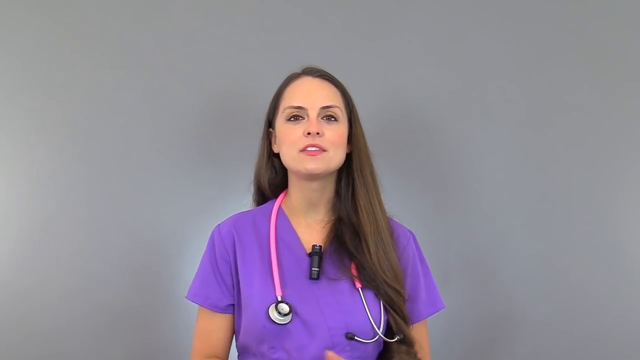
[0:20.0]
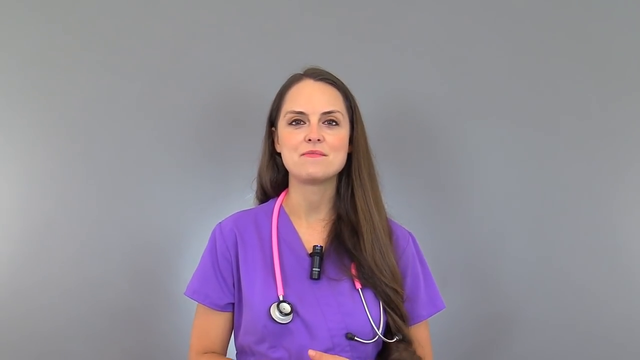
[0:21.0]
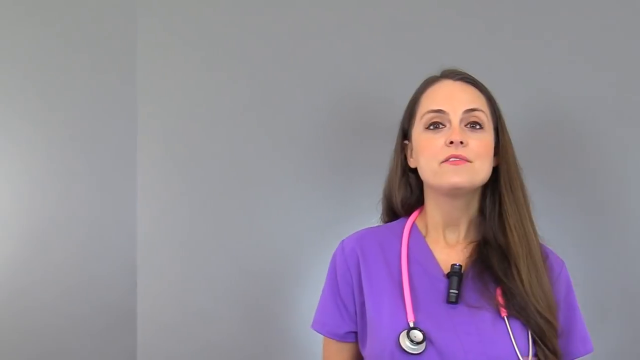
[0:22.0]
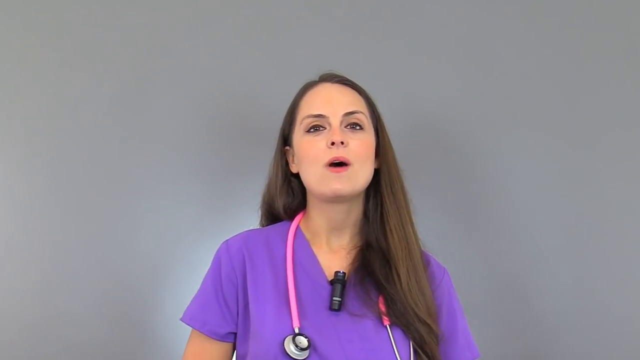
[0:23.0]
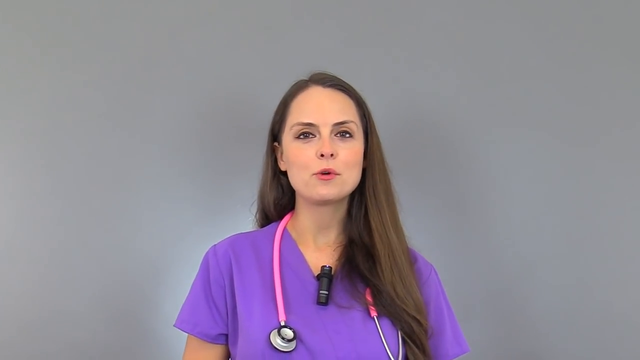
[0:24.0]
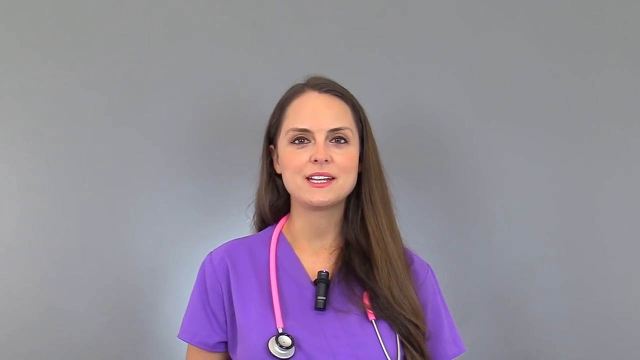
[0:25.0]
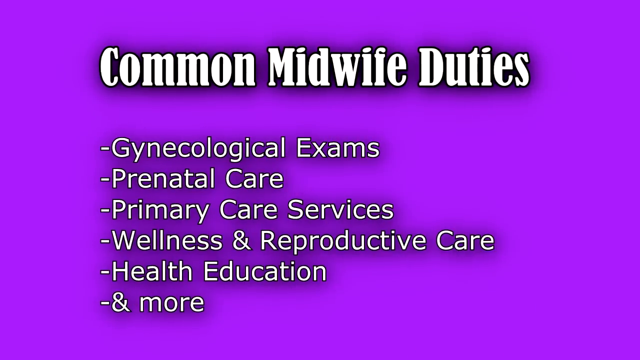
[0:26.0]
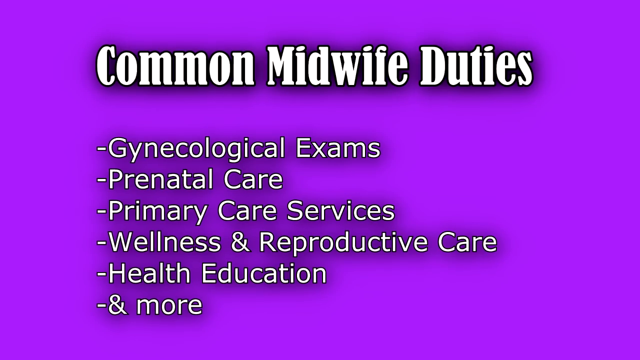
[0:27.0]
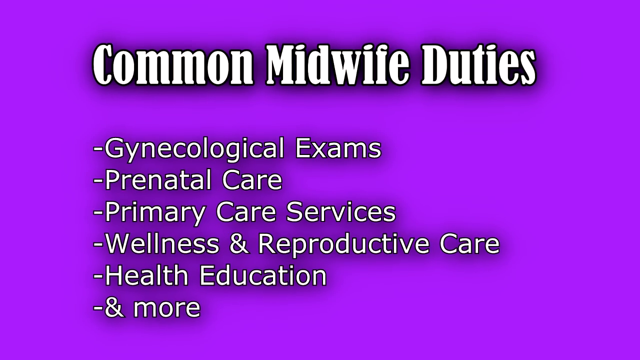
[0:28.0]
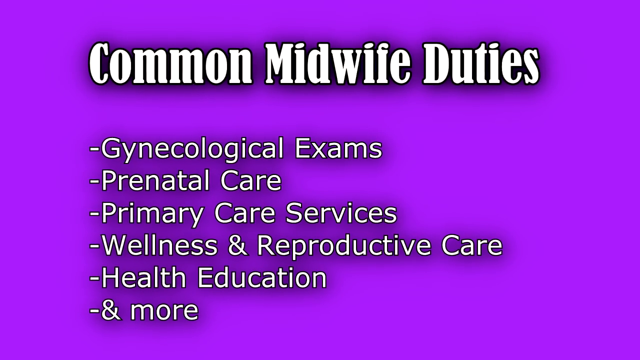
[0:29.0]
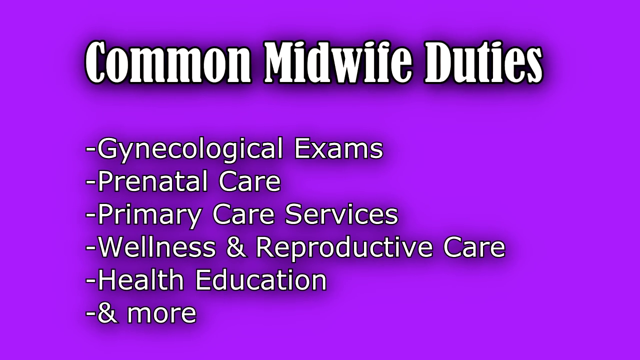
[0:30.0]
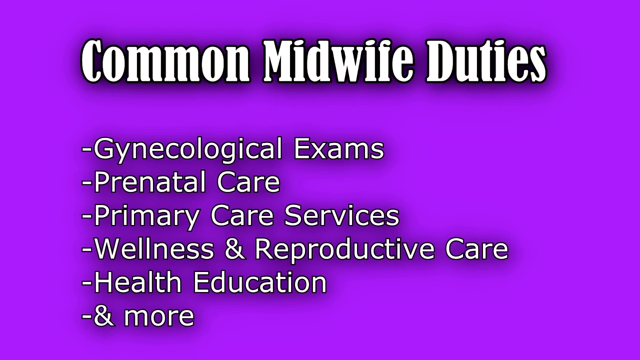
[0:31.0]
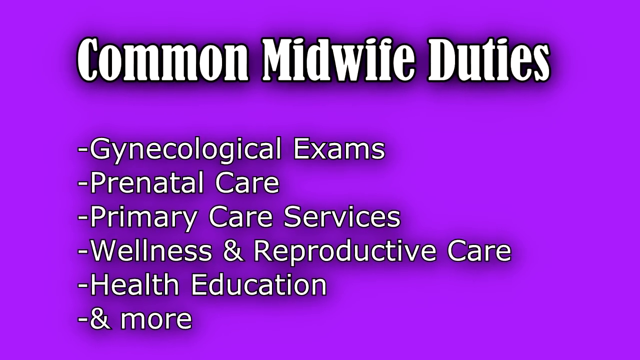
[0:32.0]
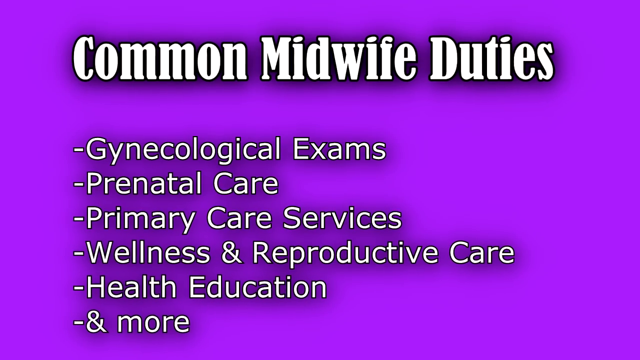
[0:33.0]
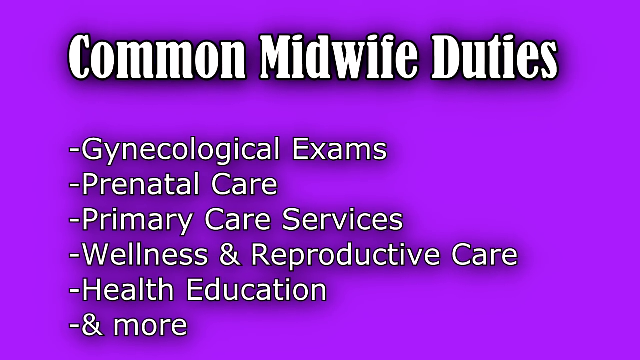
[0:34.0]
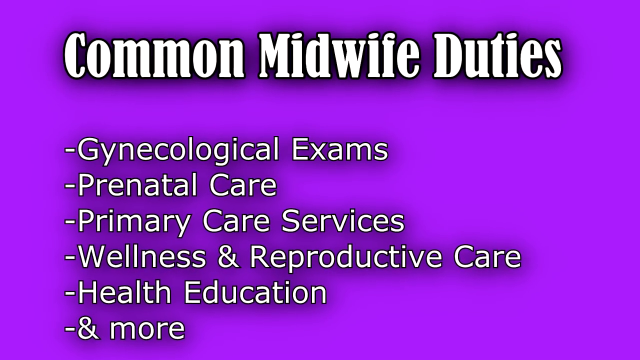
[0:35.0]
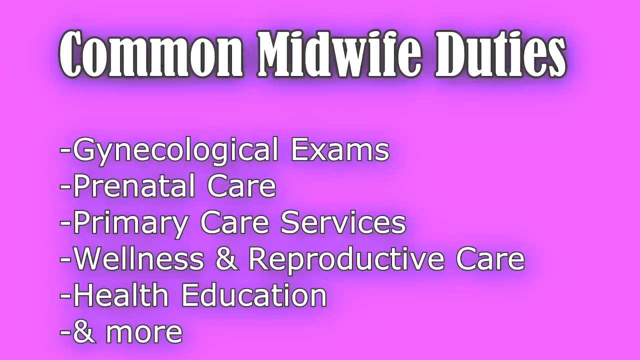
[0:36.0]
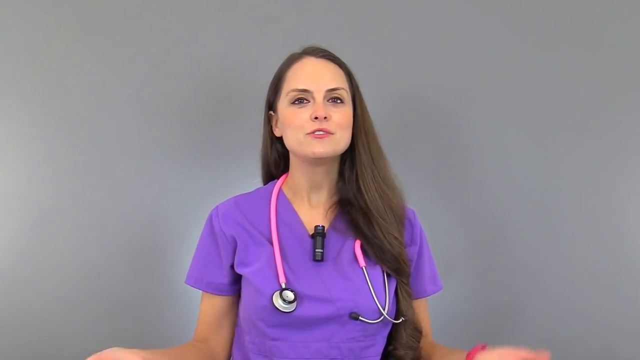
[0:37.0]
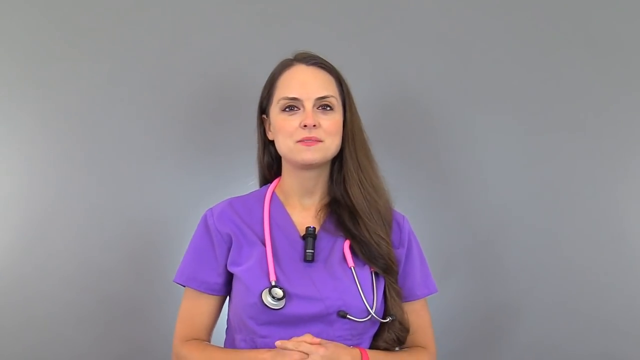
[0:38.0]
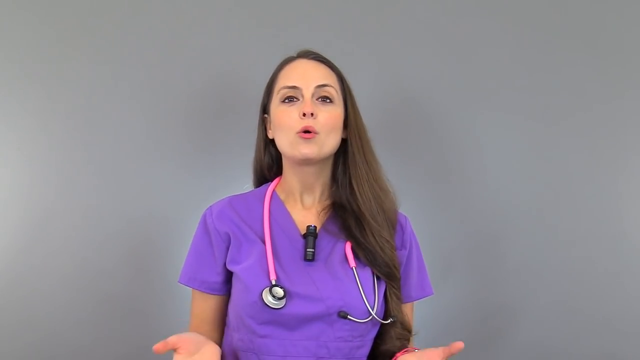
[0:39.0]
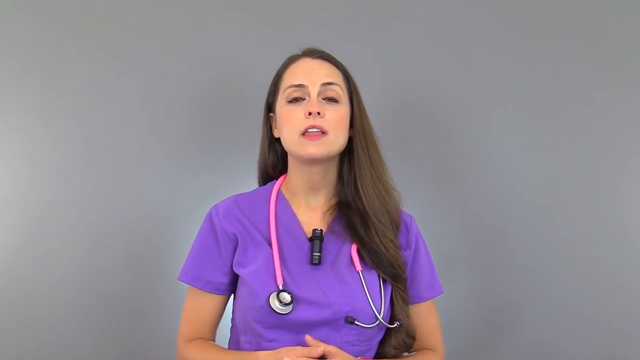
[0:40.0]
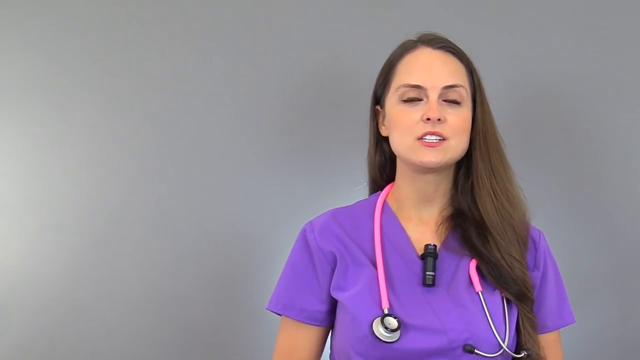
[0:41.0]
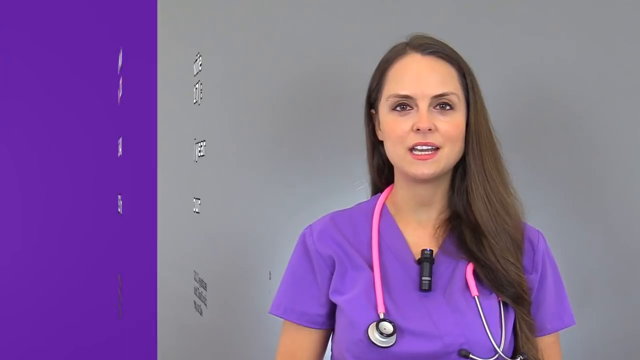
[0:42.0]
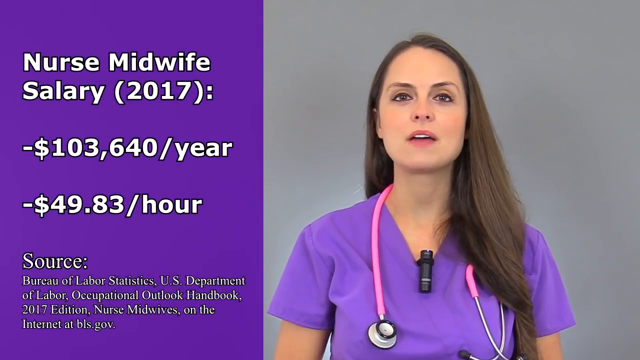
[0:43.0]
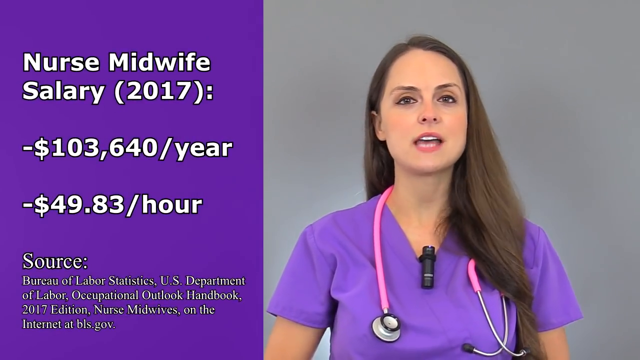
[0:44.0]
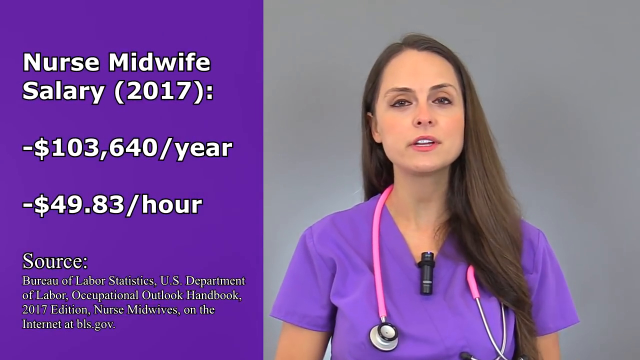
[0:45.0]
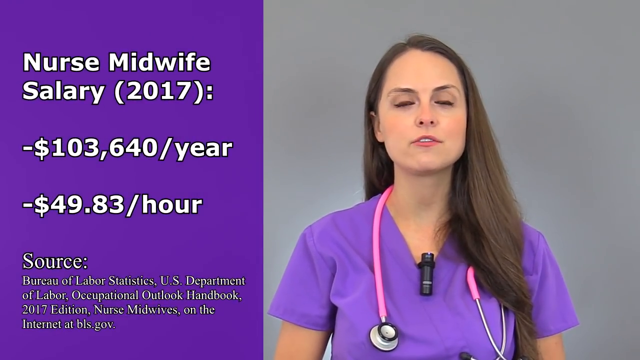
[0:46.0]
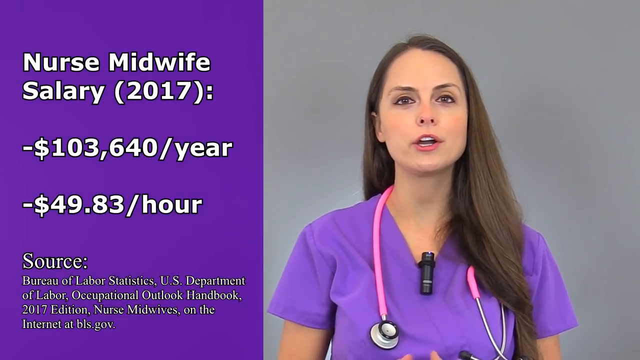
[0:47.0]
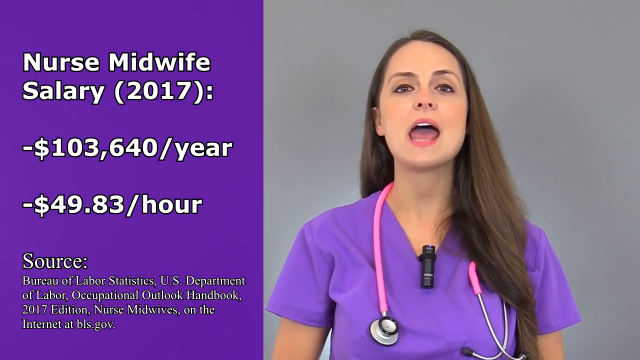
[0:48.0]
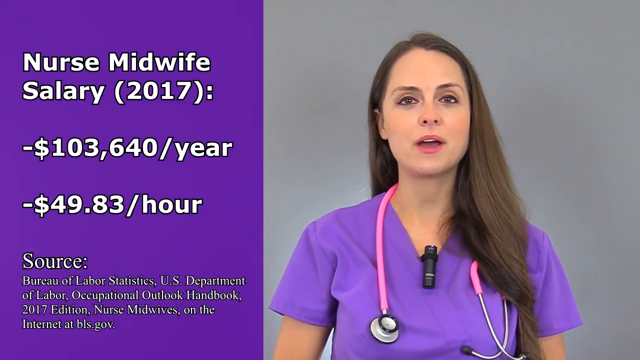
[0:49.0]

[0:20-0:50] The nurse in the purple scrub top continues talking to the camera. As she talks, another screen comes over and covers the image, but it still shows the same nurse talking to the camera. A page turns from the upper left corner to the bottom right corner, and the screen changes to a purple page with white writing outlined in black. The title, in capitals, reads "Common Midwife Duties," and beneath it six bullet points read "gynecological exams," "prenatal care," "primary care services," "wellness and reproductive care," "health education," and "more." After a flash, the nurse in the purple scrub top and pink stethoscope appears speaking toward the camera. She moves to the right and a split screen appears: she is on the right, and on the left a purple screen with white writing reads "nurse midwife salary 2017," with "$103,640 a year" beneath it and "$49.83 an hour" beneath that. At the bottom, the source is given as the Bureau of Labor Statistics and the U.S. Department of Labor.